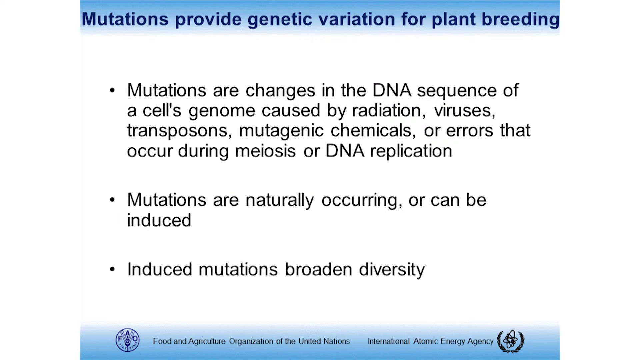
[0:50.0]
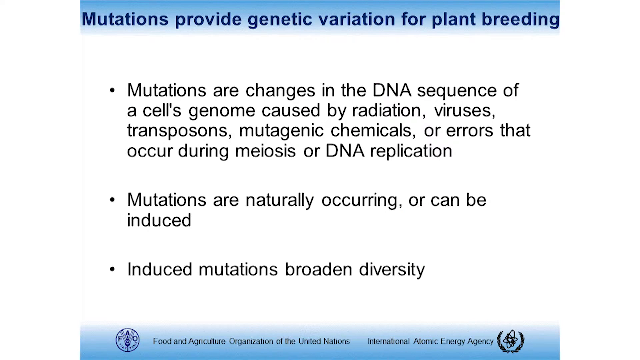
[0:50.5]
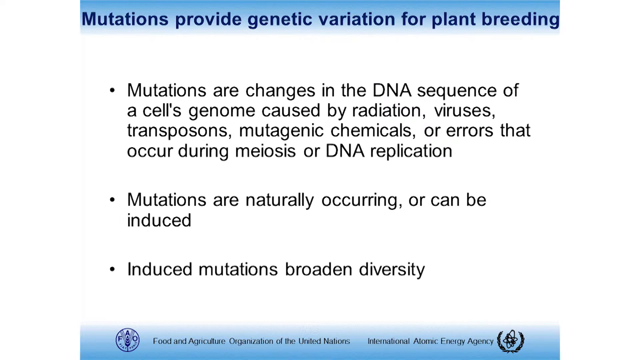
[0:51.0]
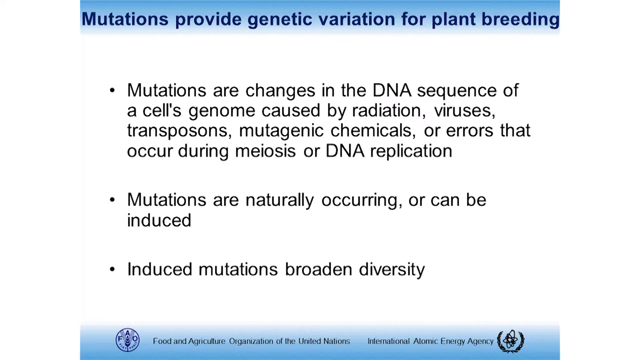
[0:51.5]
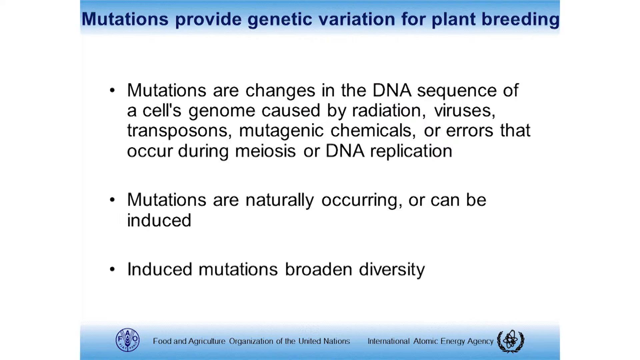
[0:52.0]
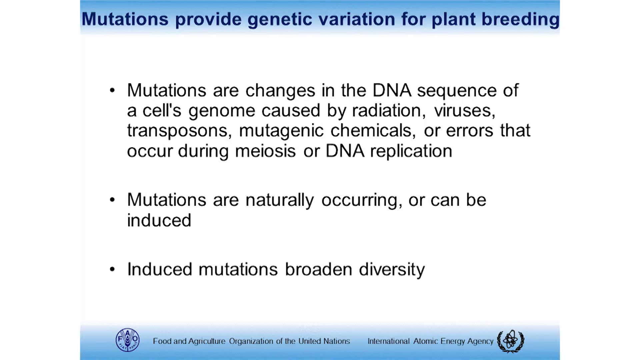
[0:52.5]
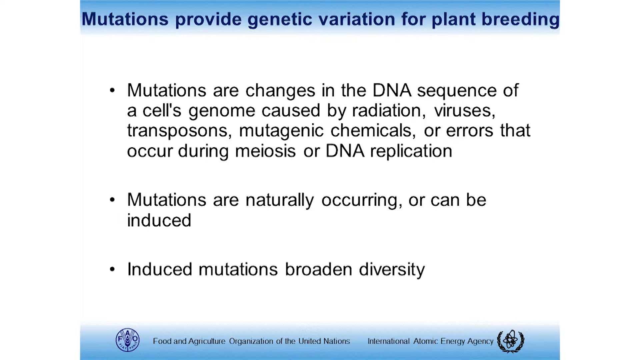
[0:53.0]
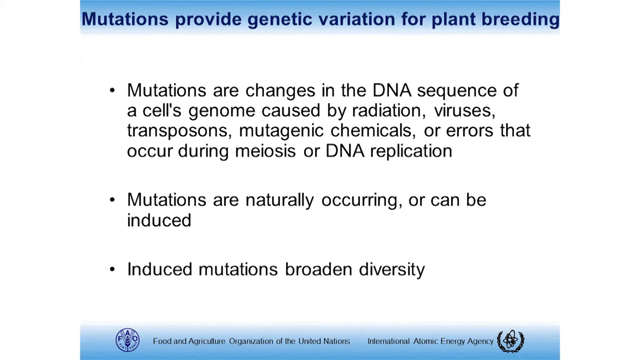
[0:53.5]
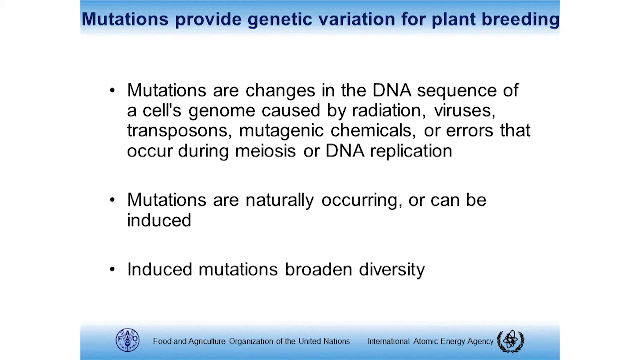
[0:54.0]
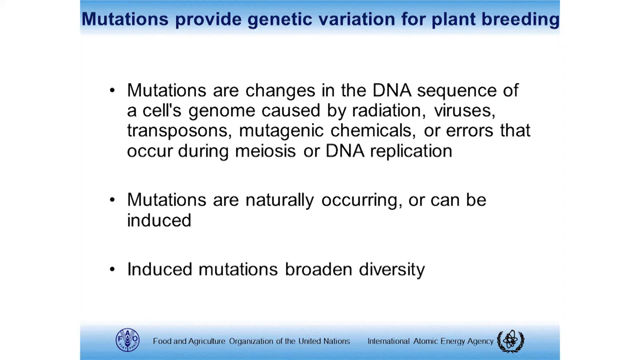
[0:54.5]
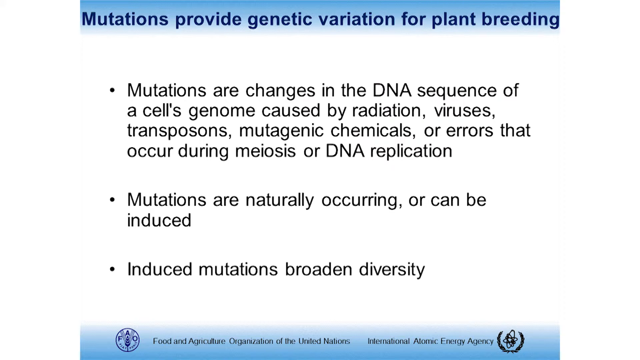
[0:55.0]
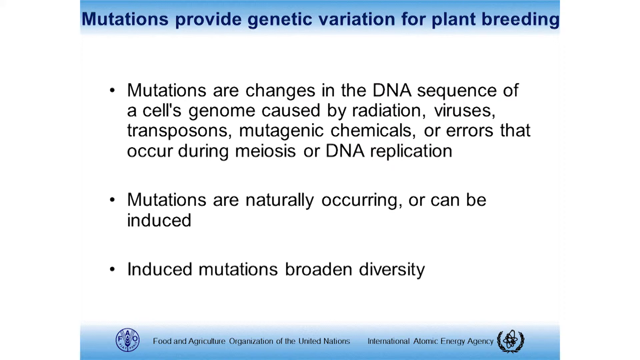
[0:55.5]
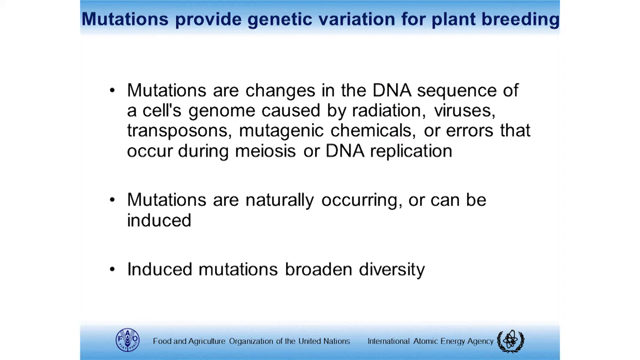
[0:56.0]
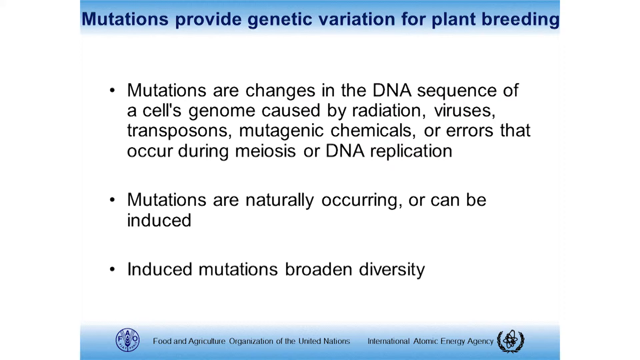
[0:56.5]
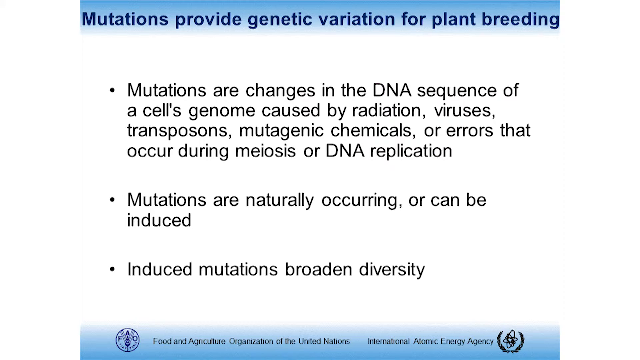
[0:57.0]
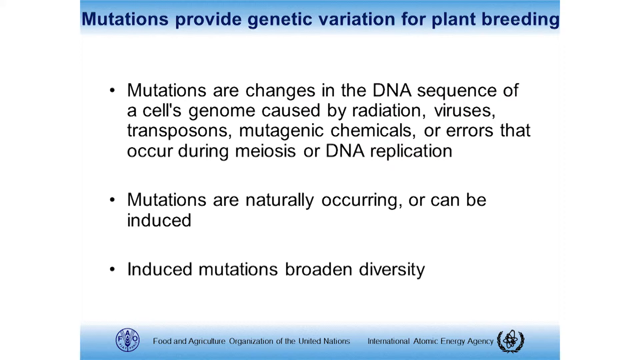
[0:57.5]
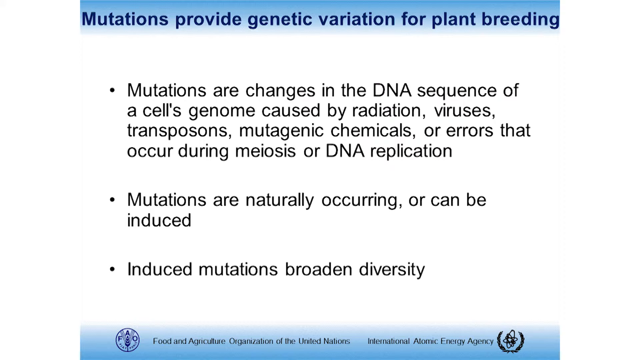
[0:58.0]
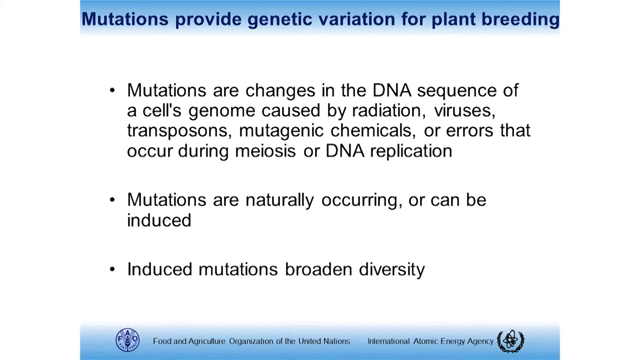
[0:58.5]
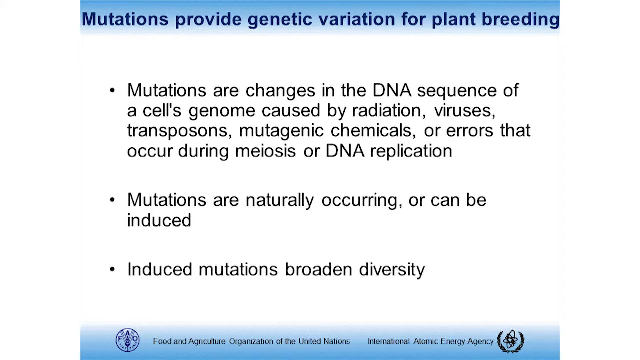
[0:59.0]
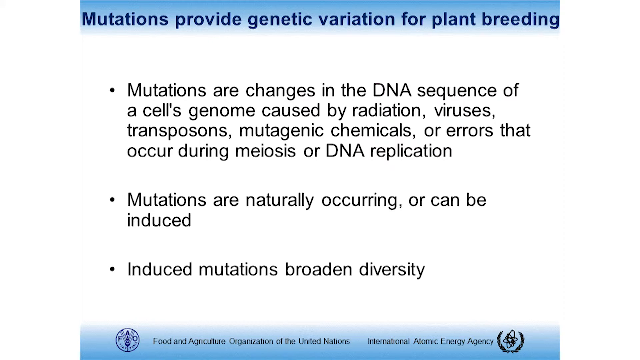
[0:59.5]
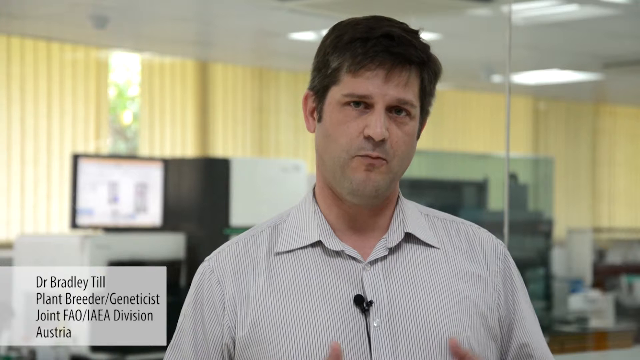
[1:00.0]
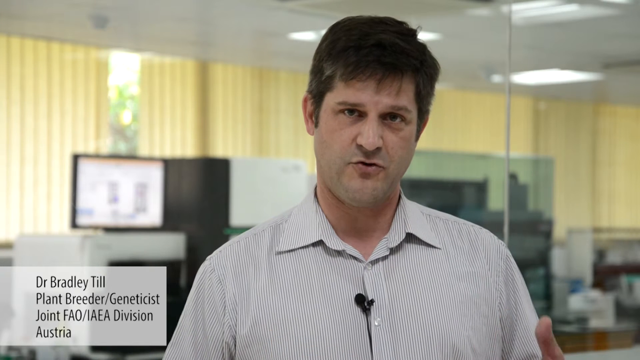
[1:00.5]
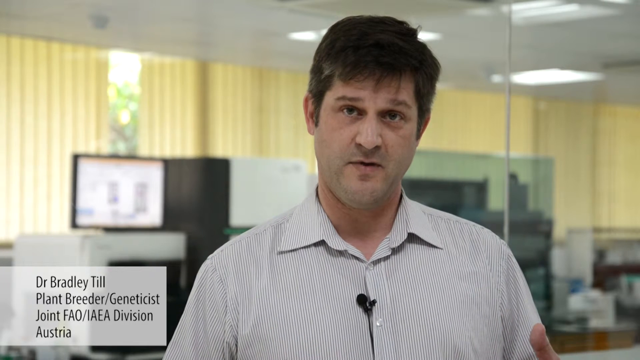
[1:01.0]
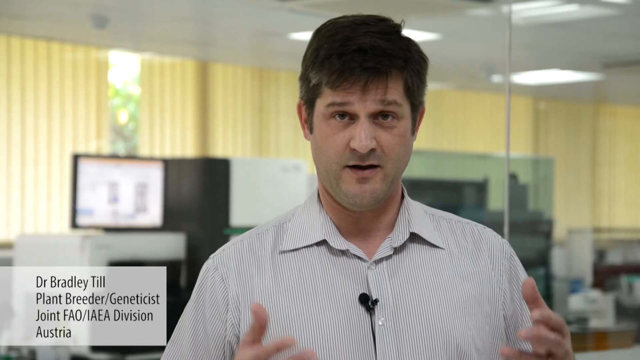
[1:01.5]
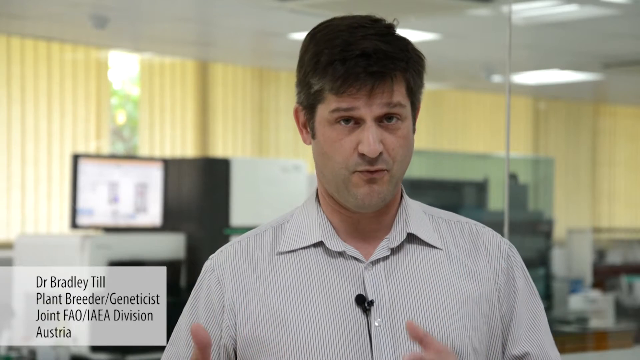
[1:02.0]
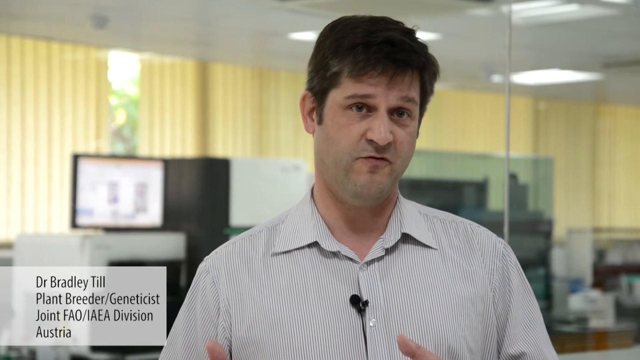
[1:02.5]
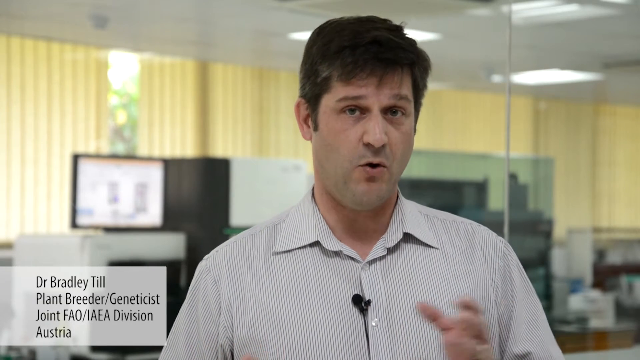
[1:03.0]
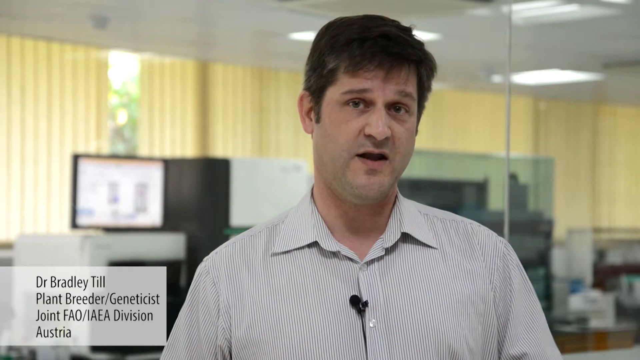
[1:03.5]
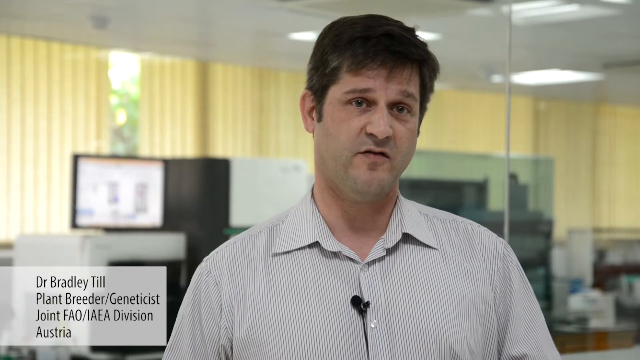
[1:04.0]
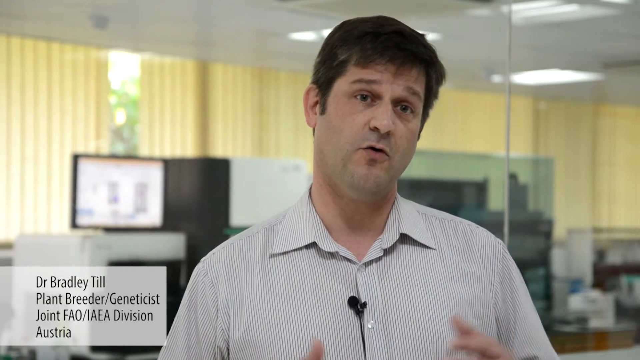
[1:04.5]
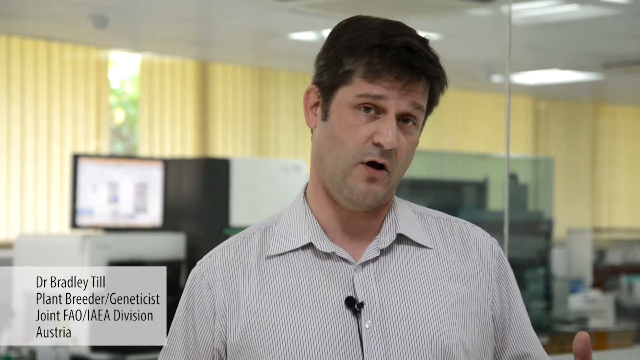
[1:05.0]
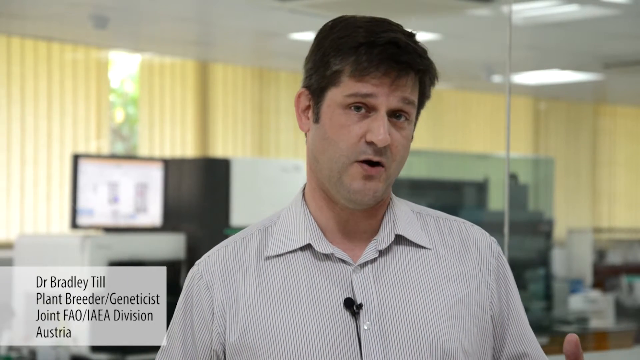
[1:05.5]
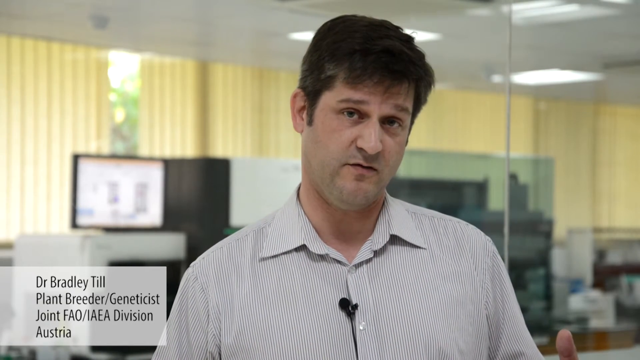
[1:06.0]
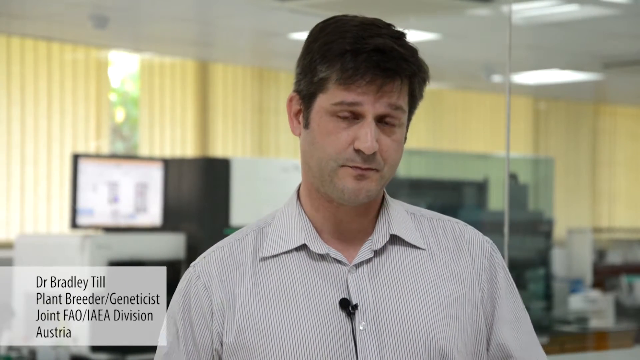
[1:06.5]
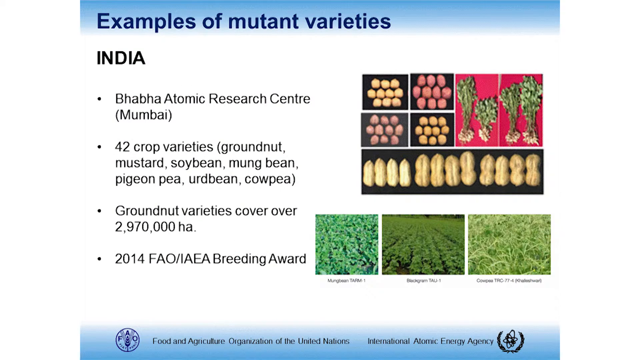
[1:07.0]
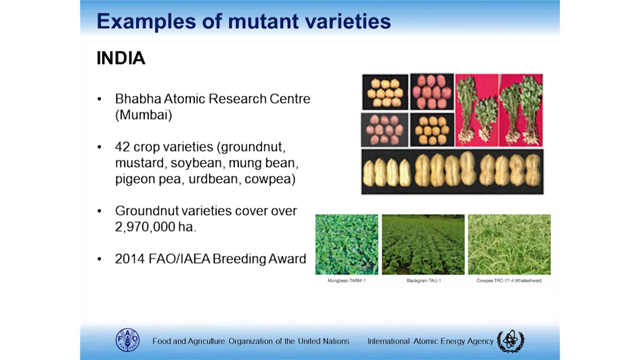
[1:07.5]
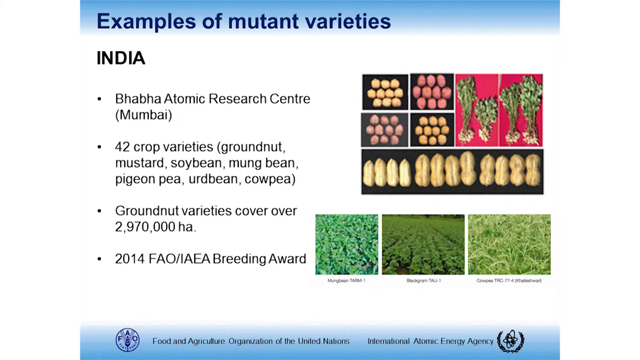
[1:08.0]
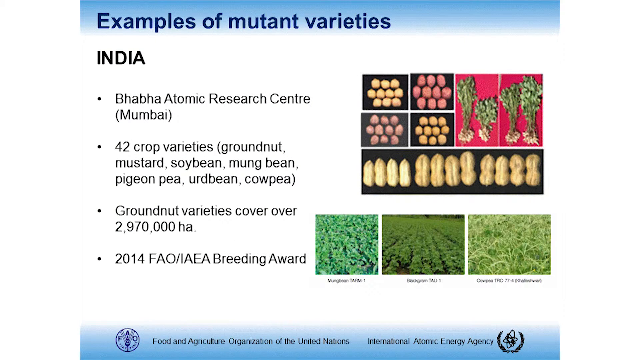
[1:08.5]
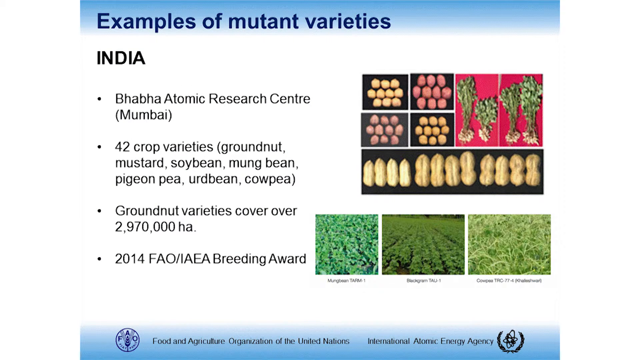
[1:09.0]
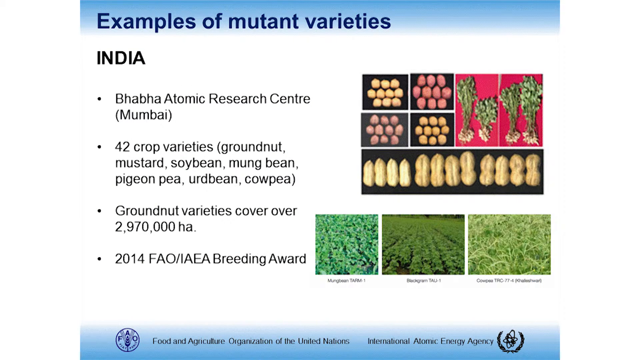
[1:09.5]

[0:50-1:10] A slide with a white background has a blue rectangular box at the top with the heading "Mutations provide genetic variation for plant breeding". Below are three bullet points: "Mutations are changes in the DNA sequence of a cell's genome caused by radiation, viruses, transposons, mutagenic chemicals, or errors that occur during meiosis or DNA replication", "mutations are naturally occurring or can be induced", and "induced mutations broaden diversity". Next, a man appears to be speaking to the camera, with a small box in the bottom left-hand corner giving his information as Dr. Bradley Till, plant breeder and geneticist, joint FAO and IAEA division, Austria. He is standing in what looks like some sort of office environment, with computers and desks around him. He is kind of holding his hands up in front of him as he speaks, fingers spread and palms up, just below the camera view, so only a little of his hands is visible moving at times. Another white slide follows with the heading "examples of mutant varieties", then "India" beneath it, and a bulleted list of examples: "Bhabha Atomic Research Center in Mumbai", "42 crop varieties, groundnut, mustard, soybean, mung bean, pigeon pea, urdbean, cowpea", "groundnut varieties cover over 2,970,000 ha", and "2014 FAO and IAEA breeding award".